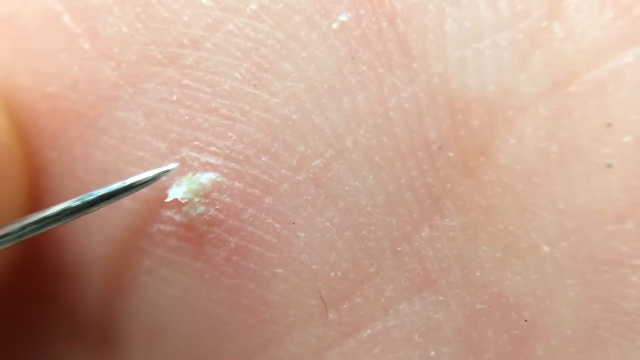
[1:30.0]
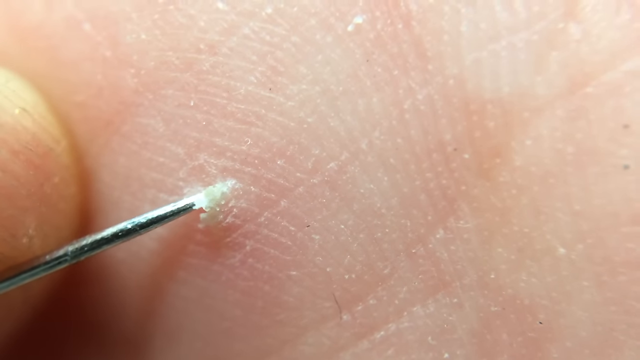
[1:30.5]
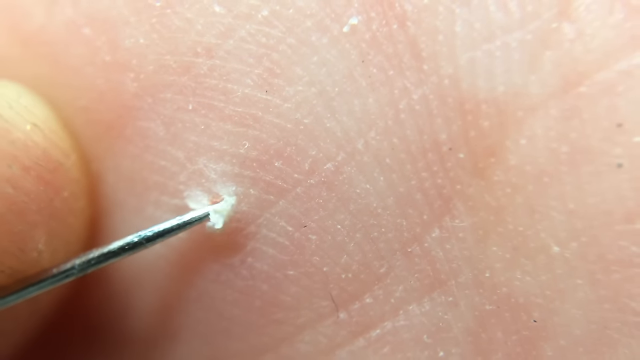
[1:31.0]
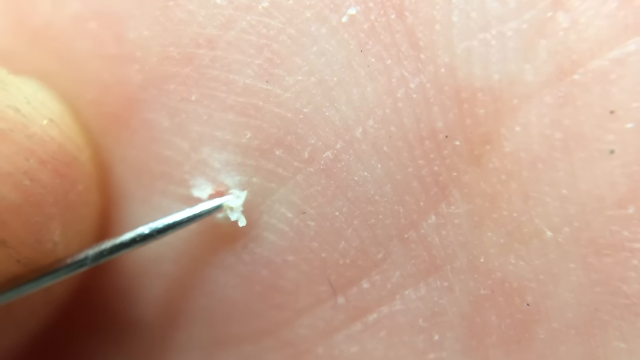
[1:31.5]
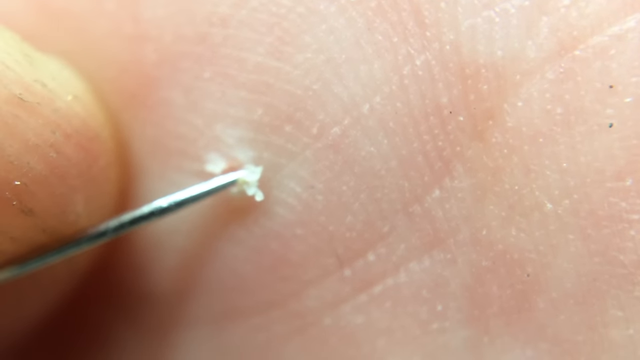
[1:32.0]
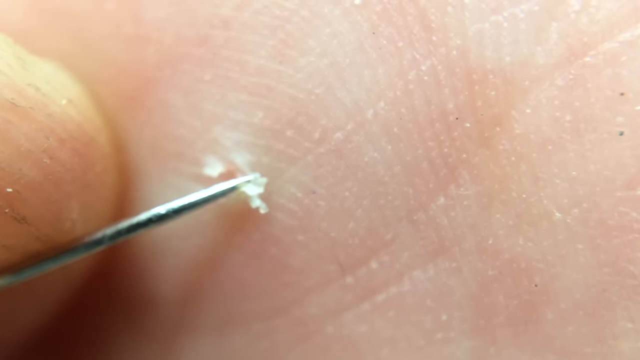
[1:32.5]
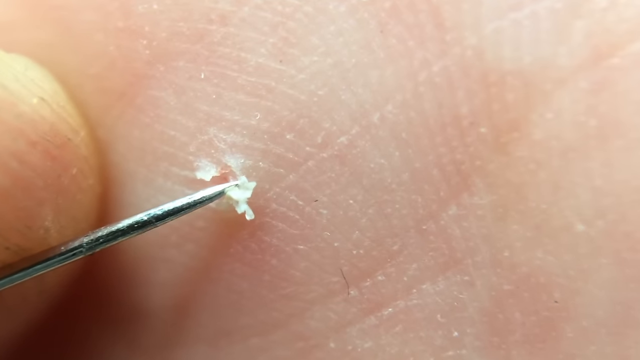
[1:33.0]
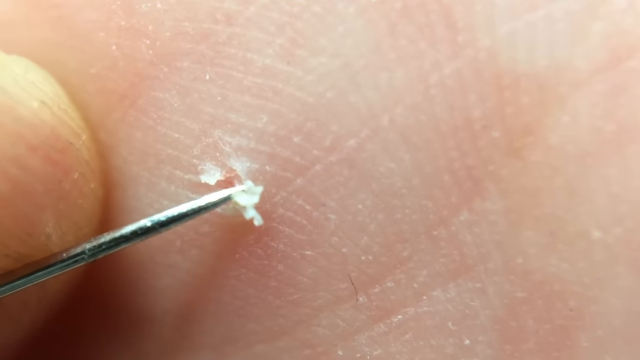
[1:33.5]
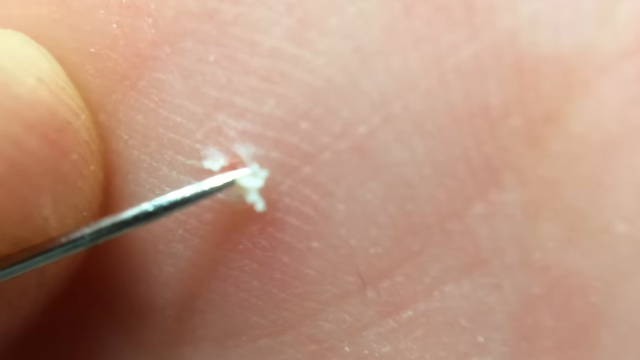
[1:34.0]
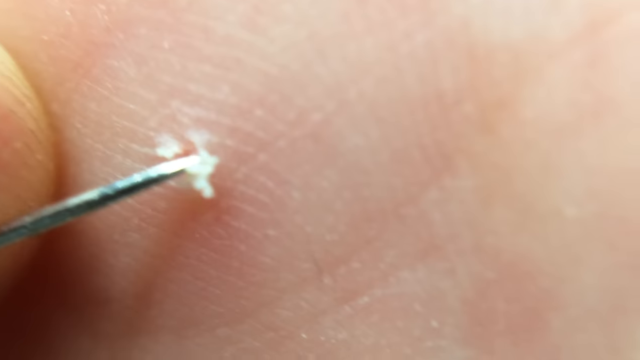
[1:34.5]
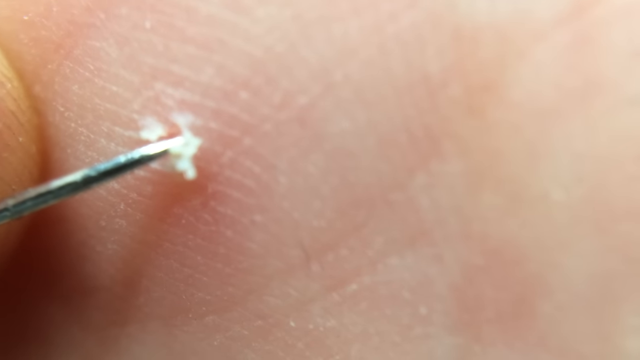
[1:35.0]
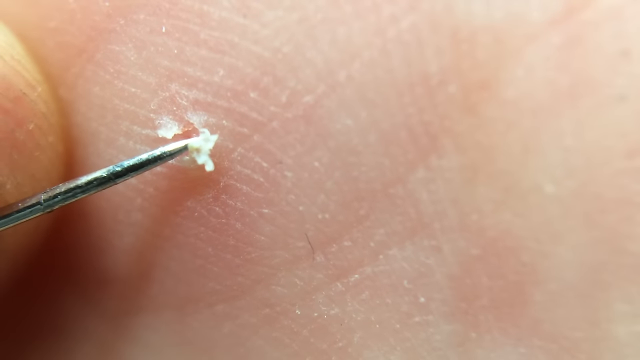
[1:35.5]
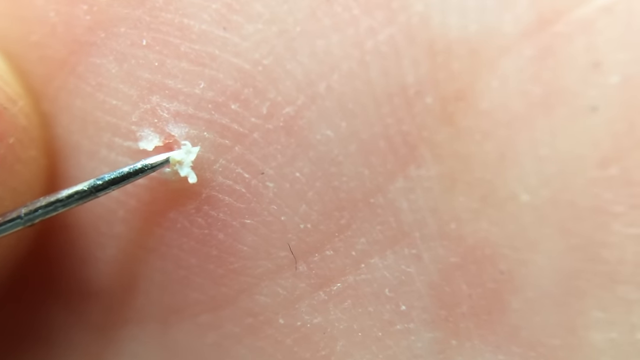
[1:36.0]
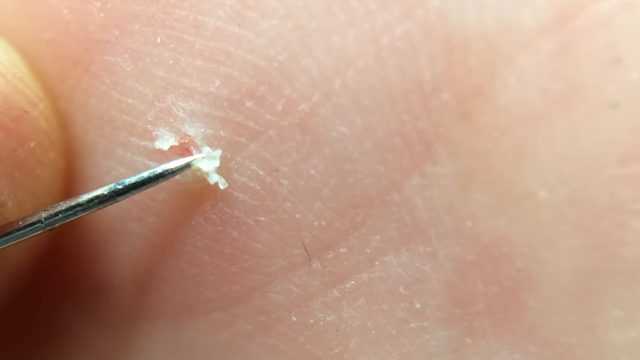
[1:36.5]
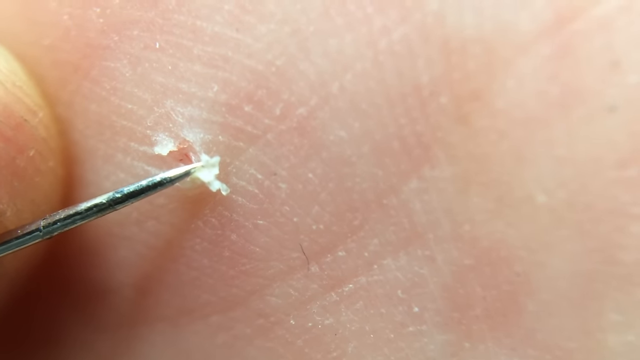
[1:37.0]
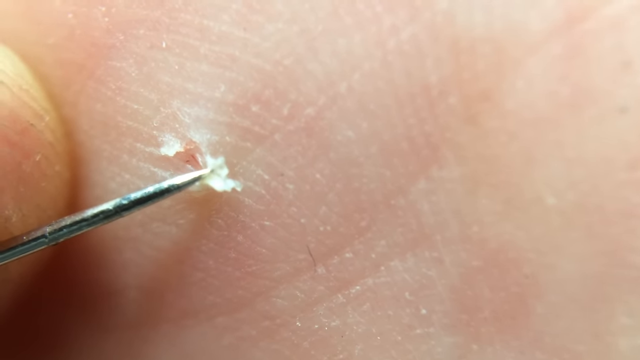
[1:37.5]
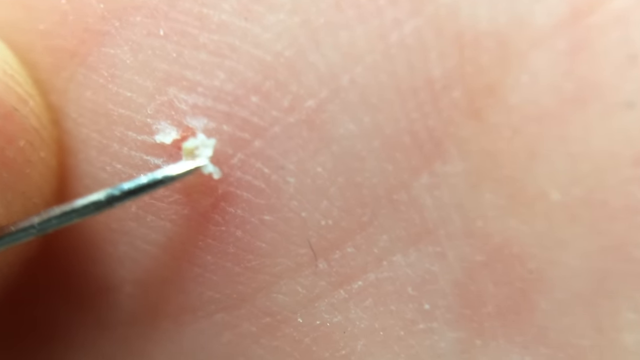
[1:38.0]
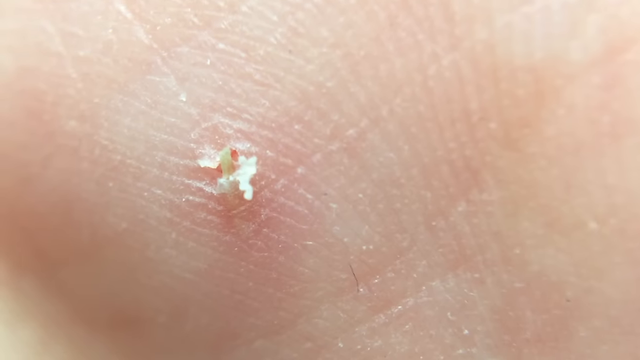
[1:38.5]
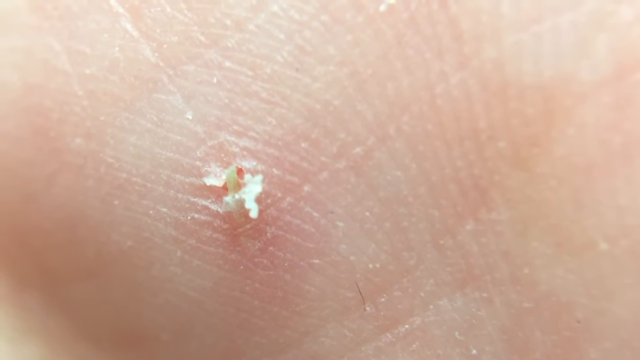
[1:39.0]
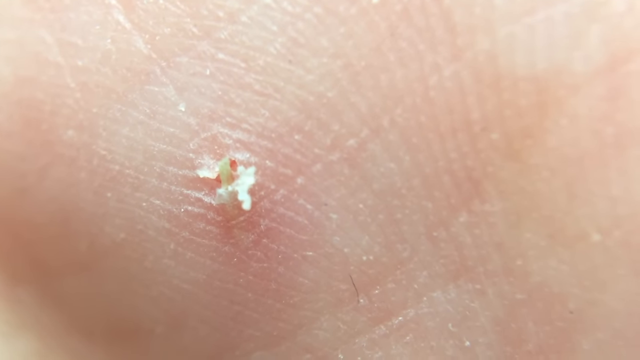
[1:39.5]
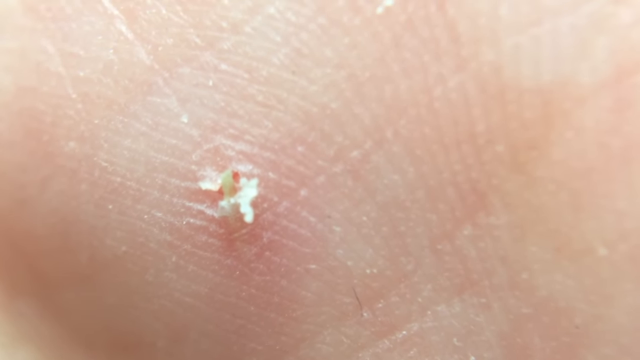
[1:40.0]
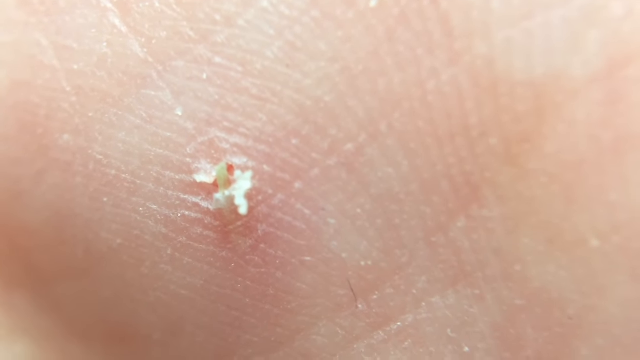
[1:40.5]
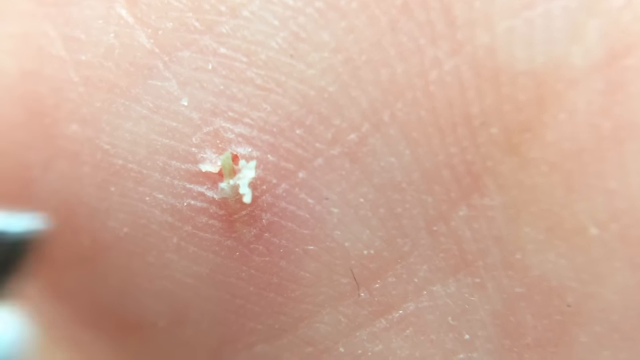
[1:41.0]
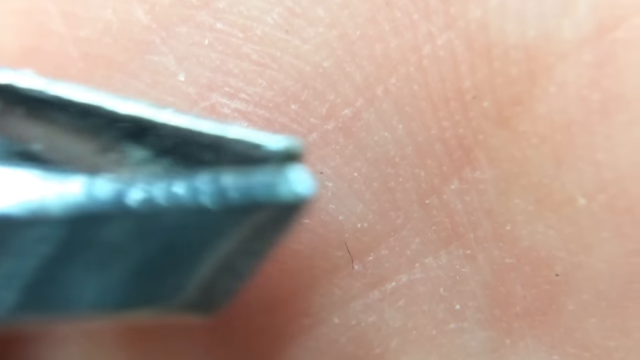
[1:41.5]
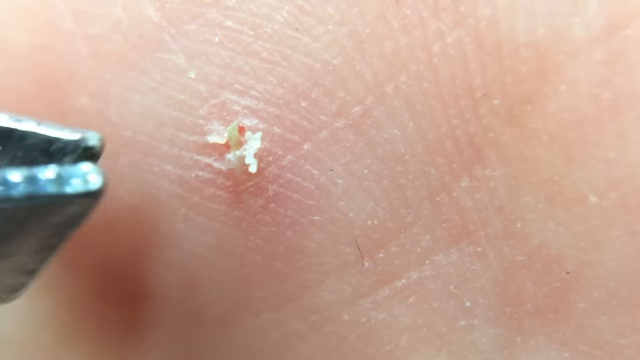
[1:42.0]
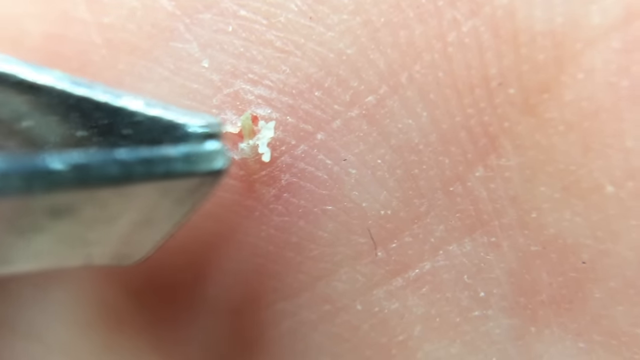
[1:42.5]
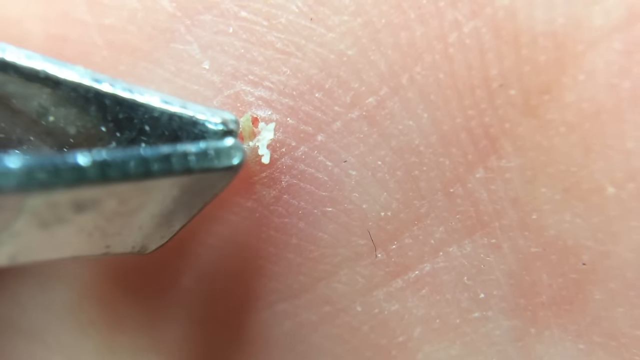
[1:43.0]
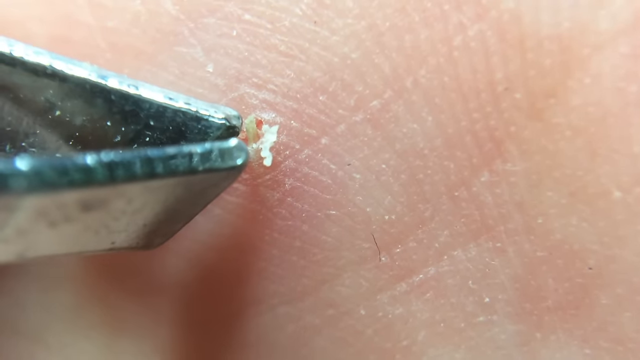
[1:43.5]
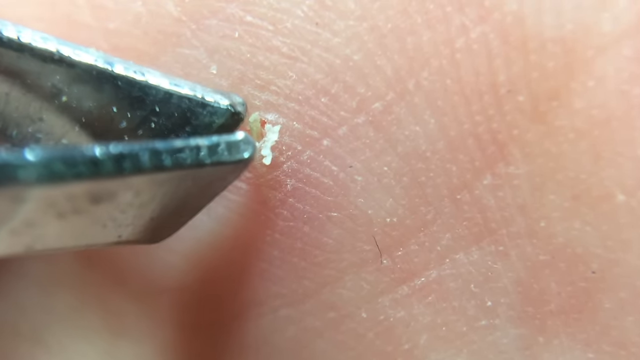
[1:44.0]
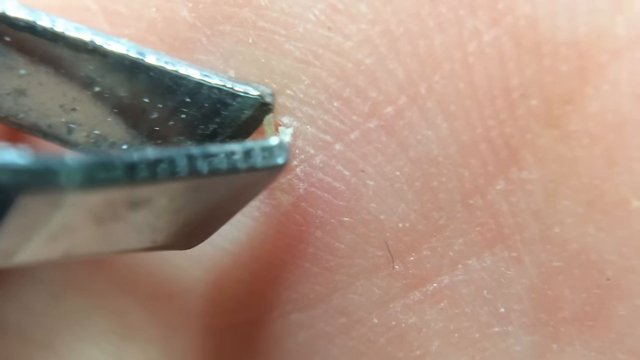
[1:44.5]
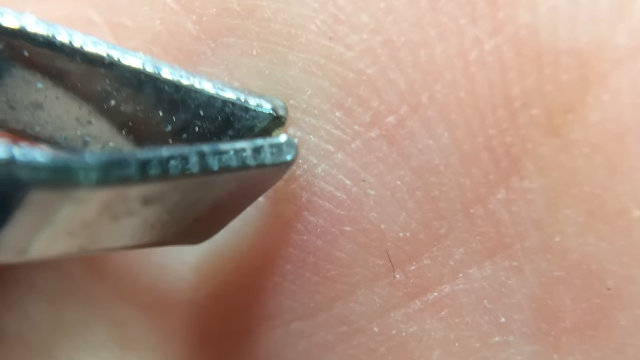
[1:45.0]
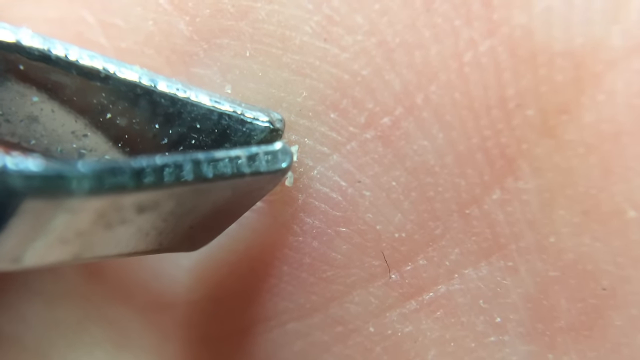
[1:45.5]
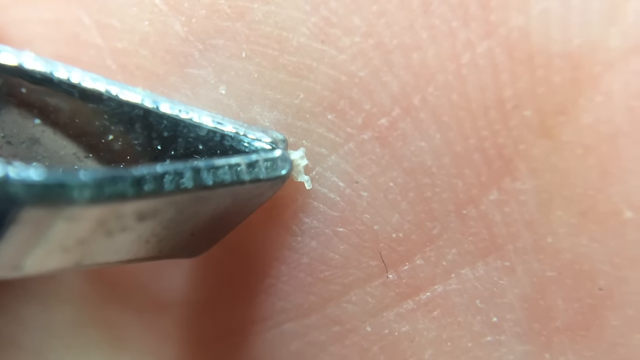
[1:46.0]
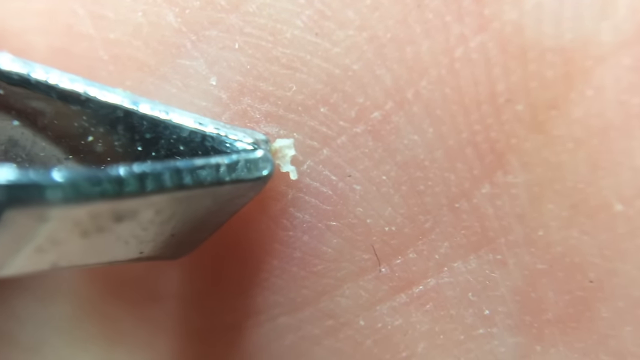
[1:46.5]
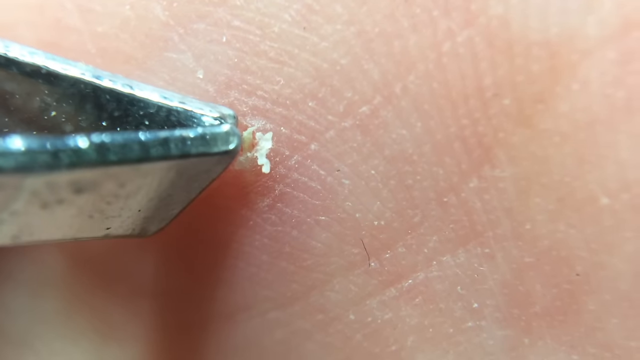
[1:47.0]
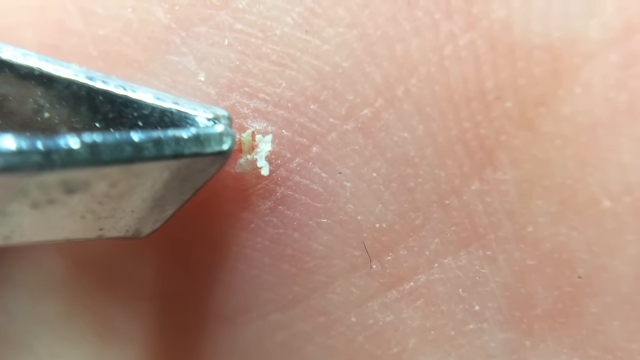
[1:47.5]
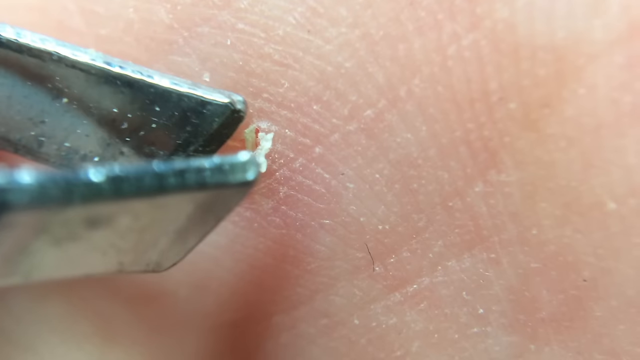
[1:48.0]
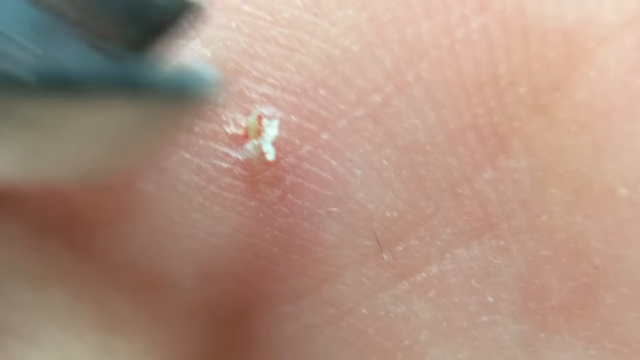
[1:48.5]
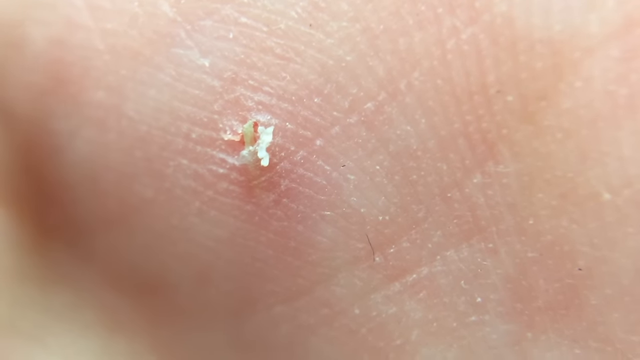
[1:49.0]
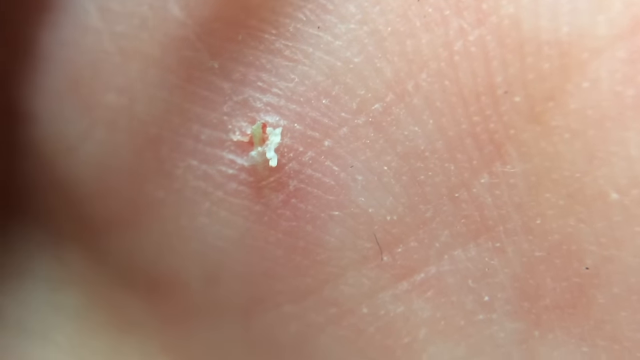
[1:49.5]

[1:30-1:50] A very zoomed-in close-up shows someone's palm with a small splinter in the skin. A bright silver, sharp metal needle comes into the frame, goes into the skin underneath the splinter and pulls up, trying to work the splinter out of his hand. He does this at different locations along the splinter: starting at the top, he sticks the needle into the skin under the splinter and pulls up, pulls the needle out, moves a little further down, pushes it under the splinter into the skin and pulls up again, repeating this. Finally, the end of the splinter is sticking out, with white skin around it. A close-up shows the heads of a pair of tweezers come in and grab the splinter, but he takes the tweezers off because the splinter is not big enough to grab yet.